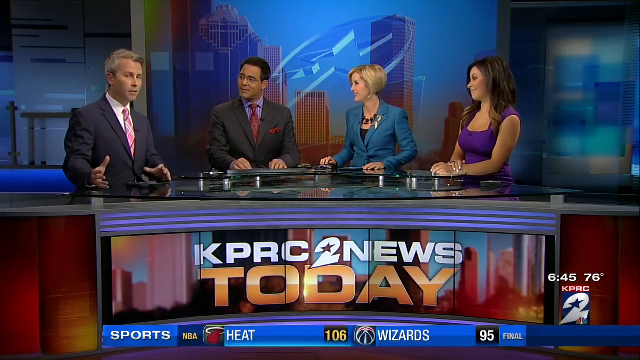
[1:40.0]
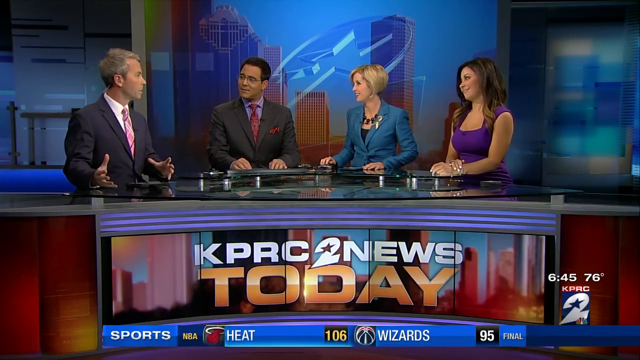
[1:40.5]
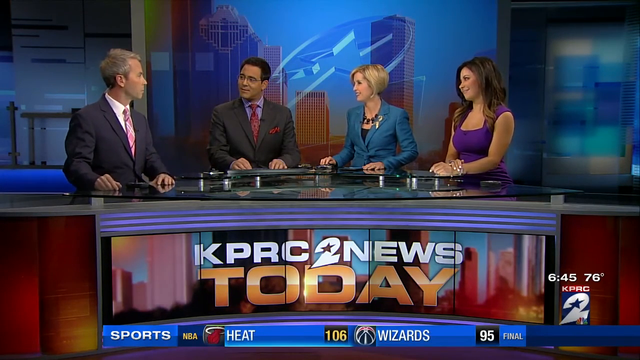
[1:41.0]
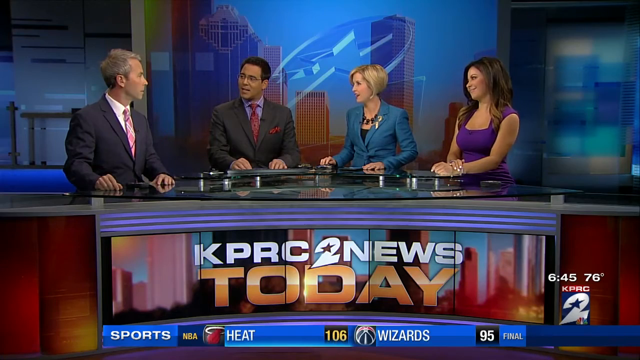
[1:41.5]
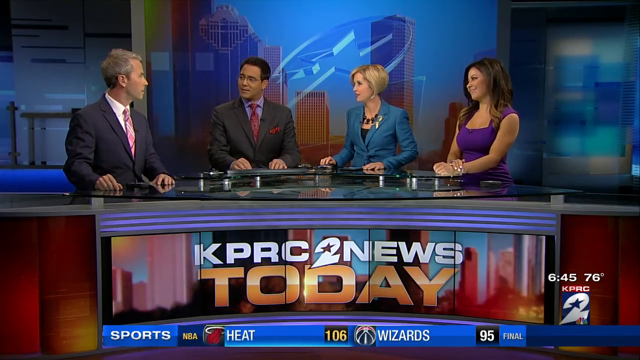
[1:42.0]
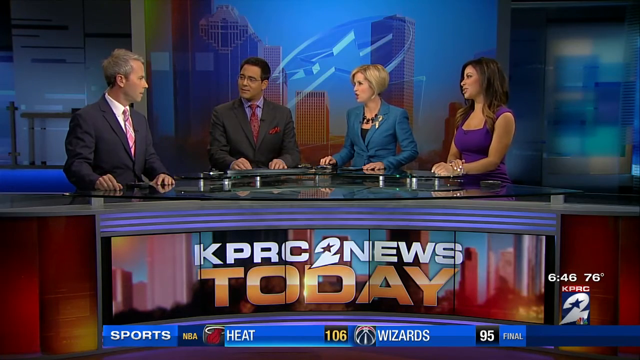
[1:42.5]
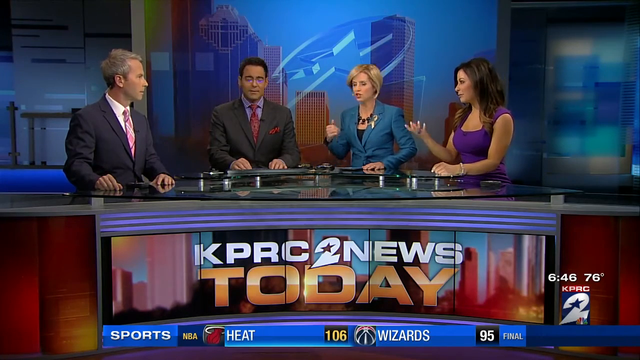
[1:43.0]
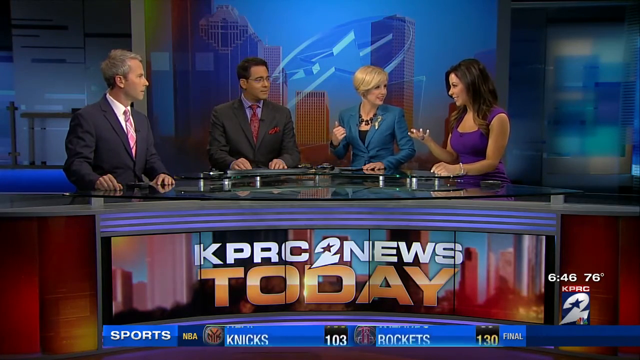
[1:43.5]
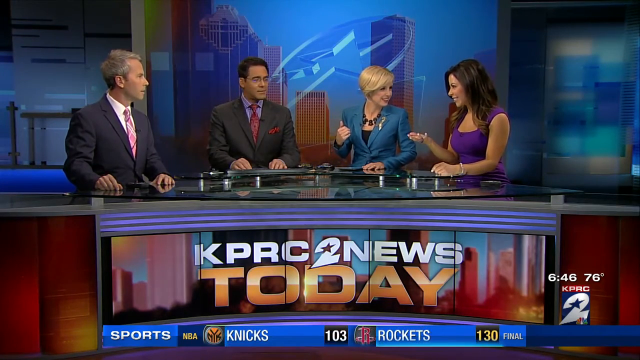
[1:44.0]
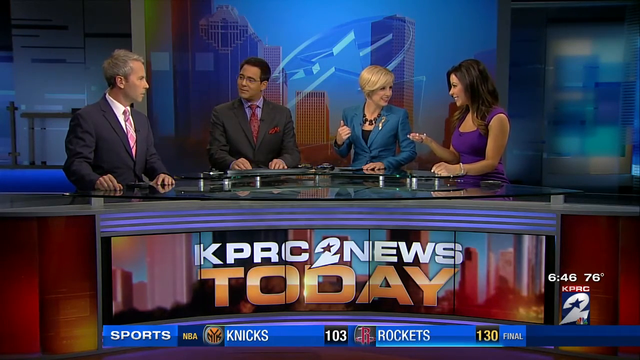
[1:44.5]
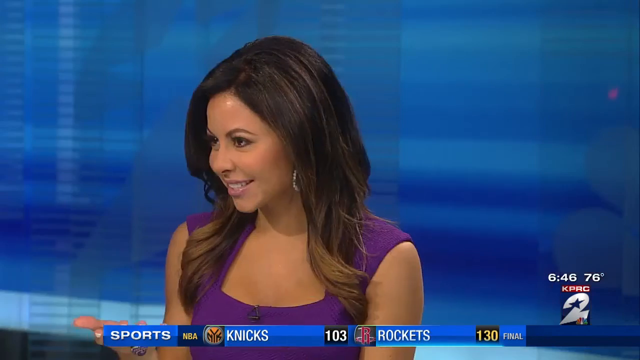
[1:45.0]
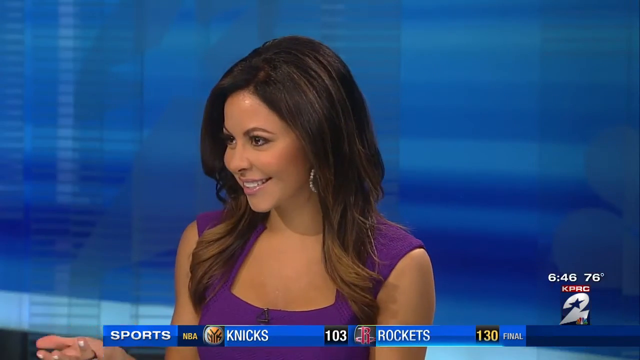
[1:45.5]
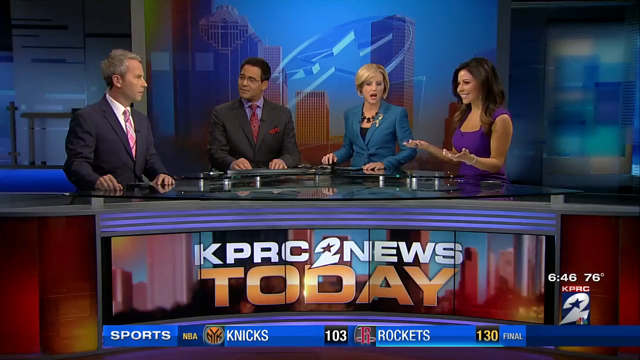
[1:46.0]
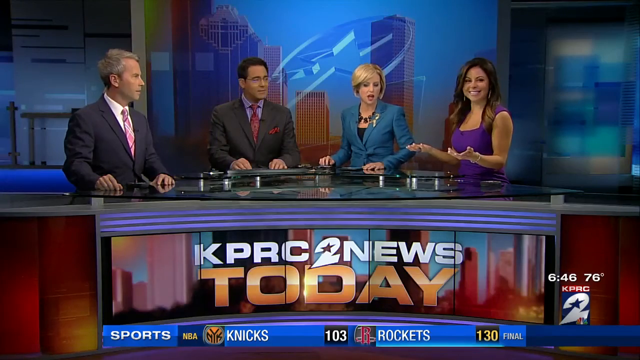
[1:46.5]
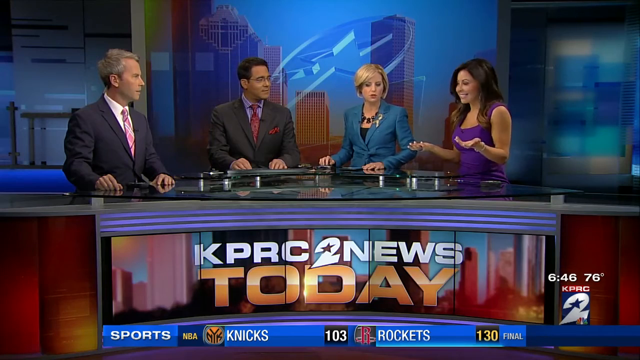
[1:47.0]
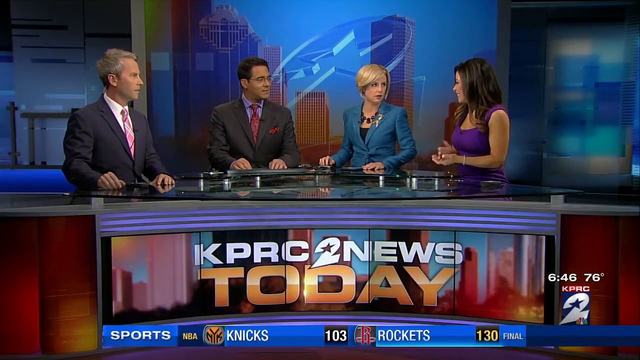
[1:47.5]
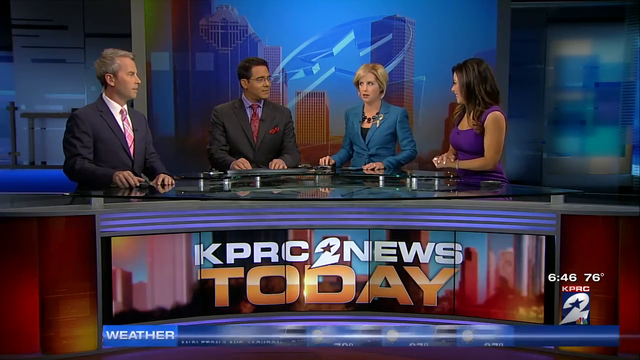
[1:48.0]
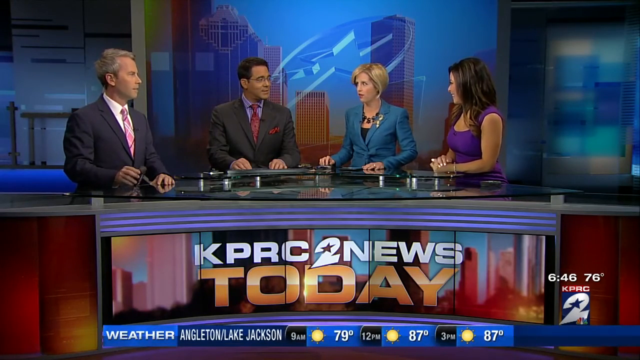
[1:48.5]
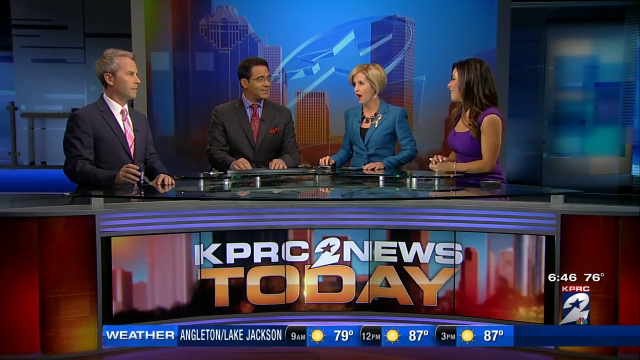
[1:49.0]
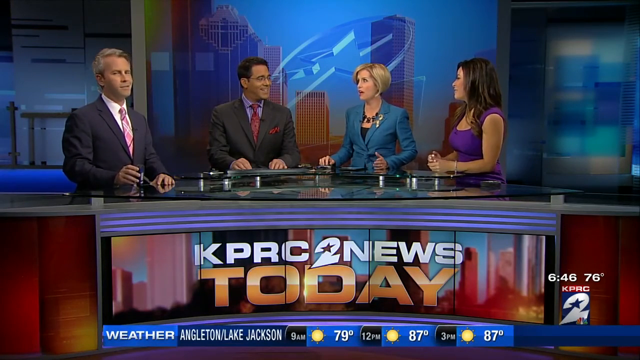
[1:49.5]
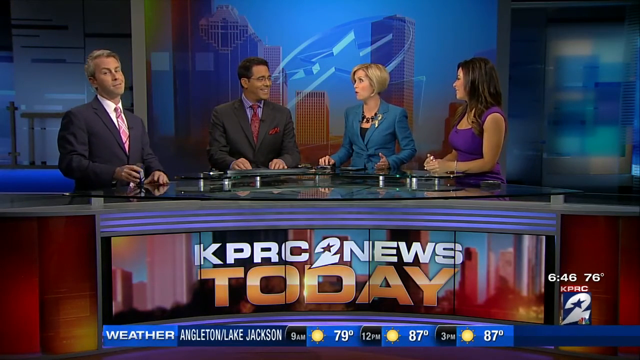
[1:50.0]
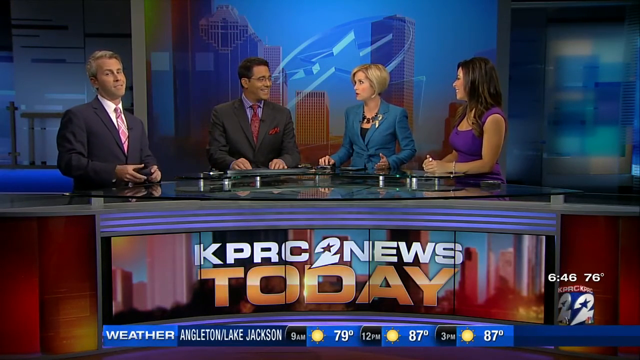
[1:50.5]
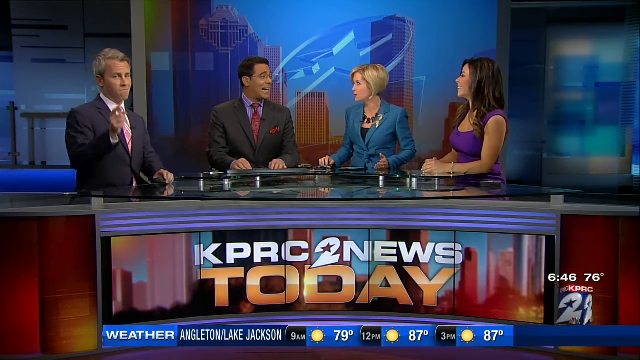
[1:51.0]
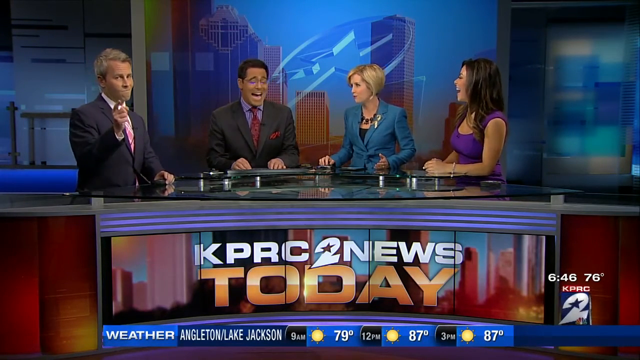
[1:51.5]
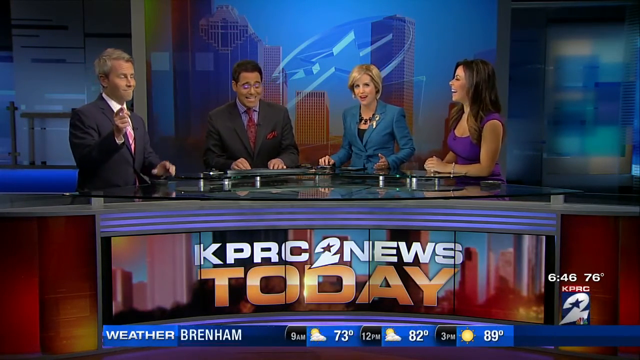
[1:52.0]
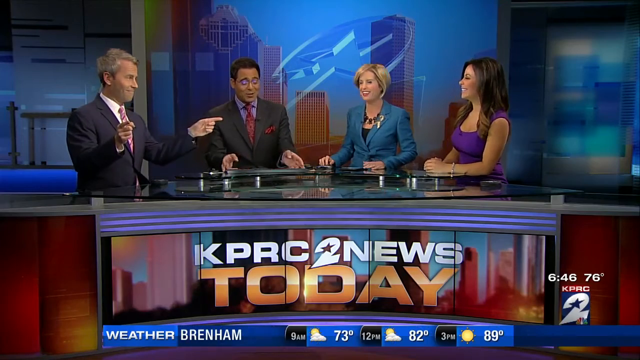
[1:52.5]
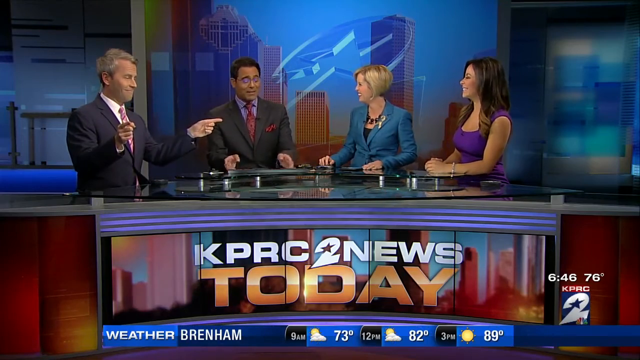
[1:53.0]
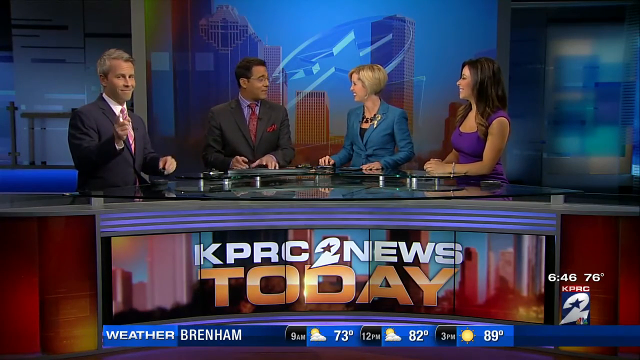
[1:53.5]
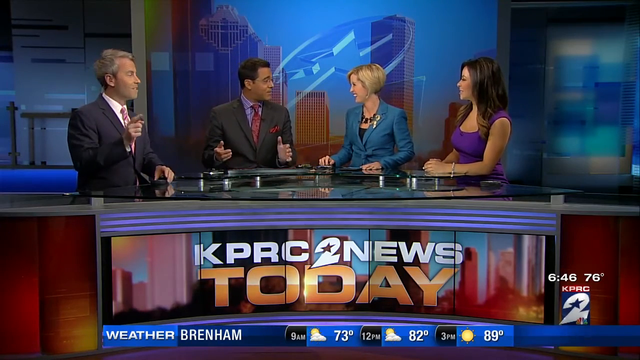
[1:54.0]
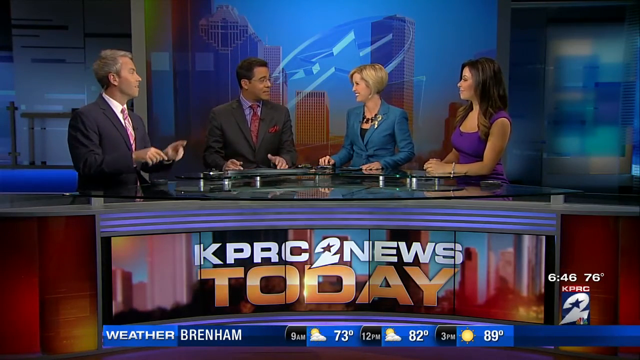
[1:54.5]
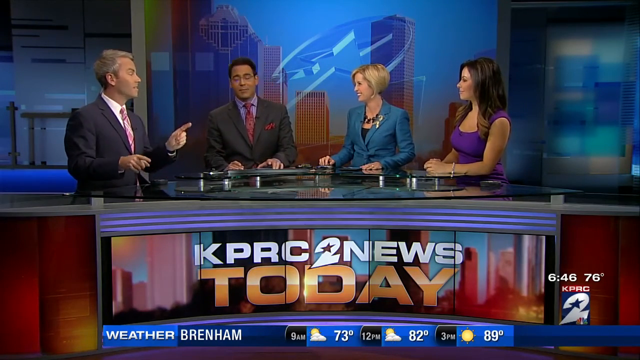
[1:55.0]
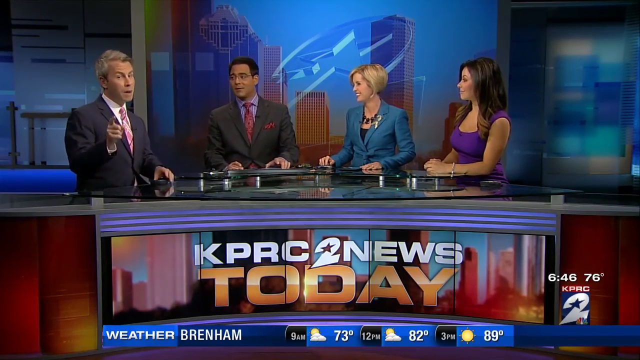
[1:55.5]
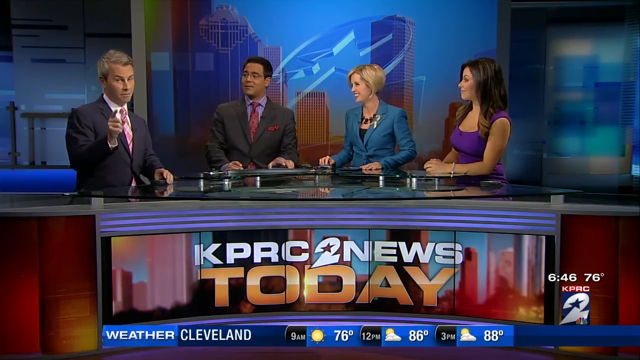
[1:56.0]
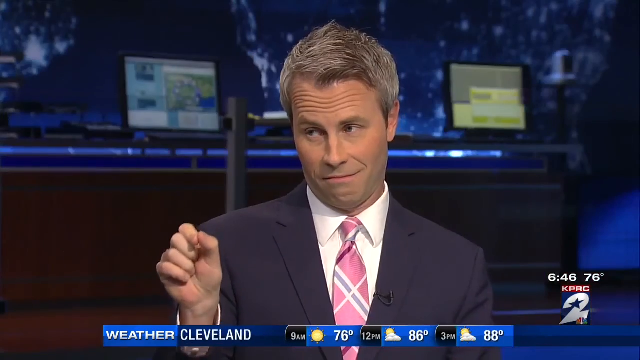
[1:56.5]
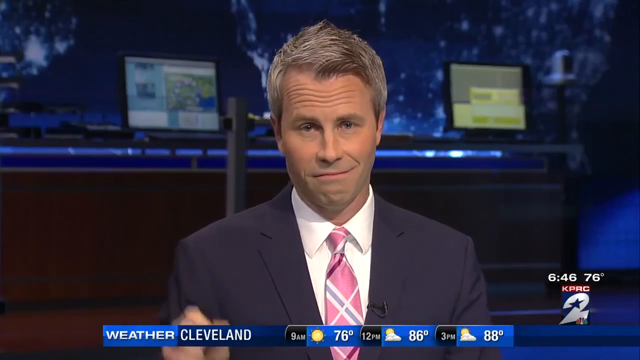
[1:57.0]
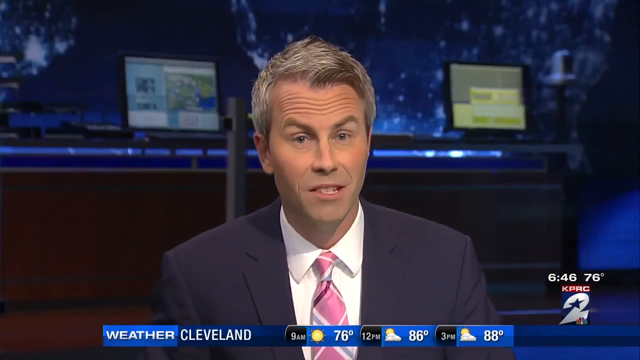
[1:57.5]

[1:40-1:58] Four reporters are now on screen: the two shown earlier, Owen Confleti and Amy Davis, plus a female reporter on the far right wearing a purple jersey and a male reporter on the far left wearing a black suit. The reporters are in conversation; the woman in purple gestures, and the man on the far left points toward the camera and toward the other reporters. A screen on the front of the table reads "KPRC 2 News Today." At the bottom, a sports headline shows NBA Heat vs Wizard, final score 106 for the Heat and 95 for the Wizard. The time is 6:45 and the weather is 76 degrees. Scores for Nix versus Roccat are also shown: Nix 103, Roccat 130, final.